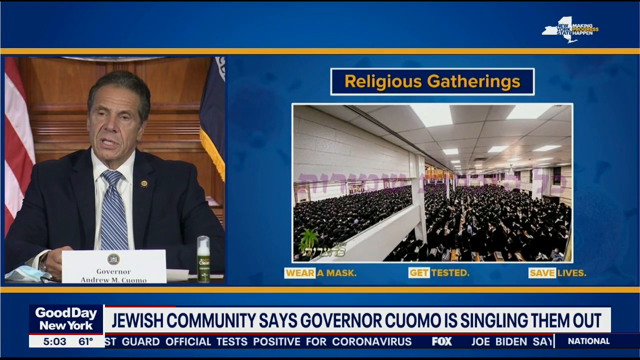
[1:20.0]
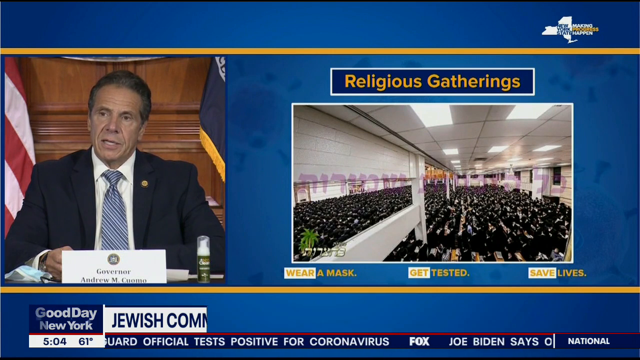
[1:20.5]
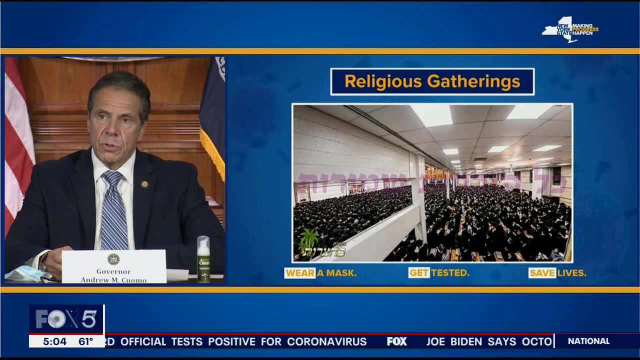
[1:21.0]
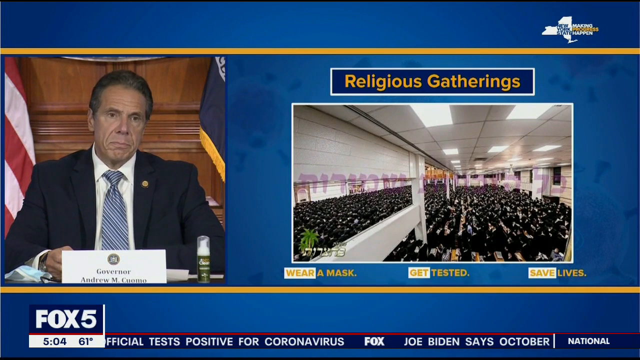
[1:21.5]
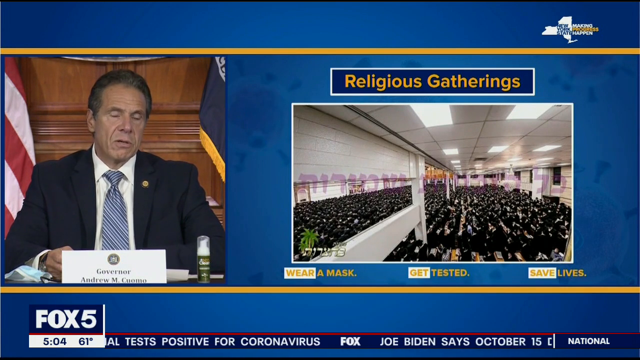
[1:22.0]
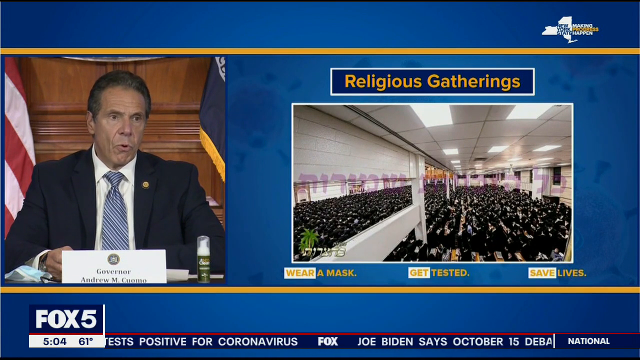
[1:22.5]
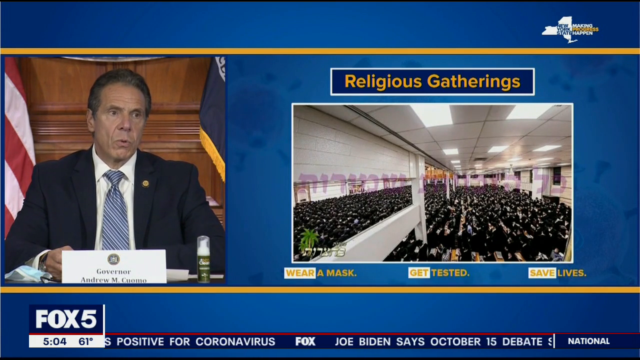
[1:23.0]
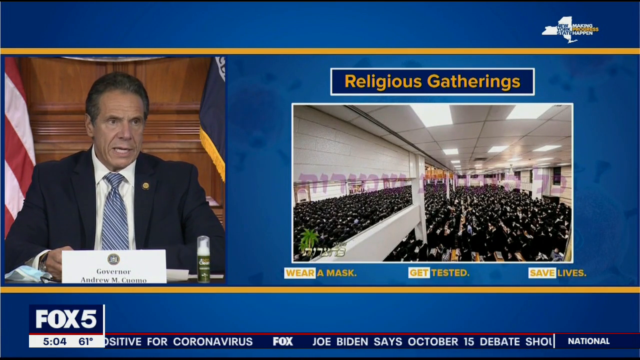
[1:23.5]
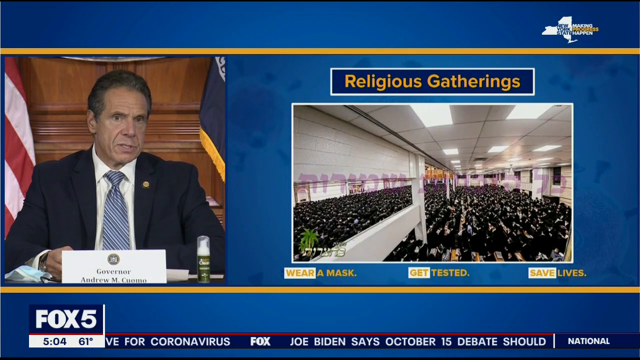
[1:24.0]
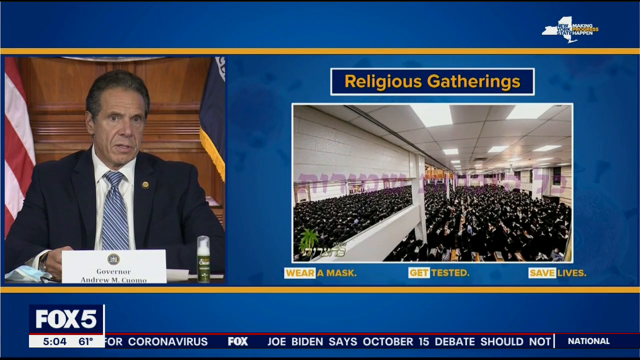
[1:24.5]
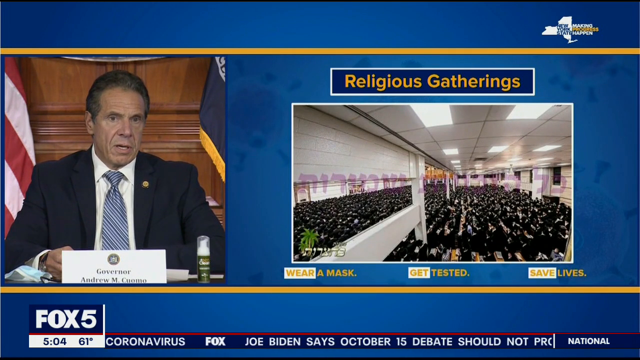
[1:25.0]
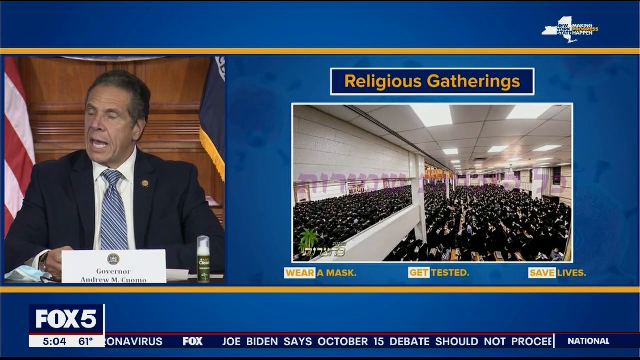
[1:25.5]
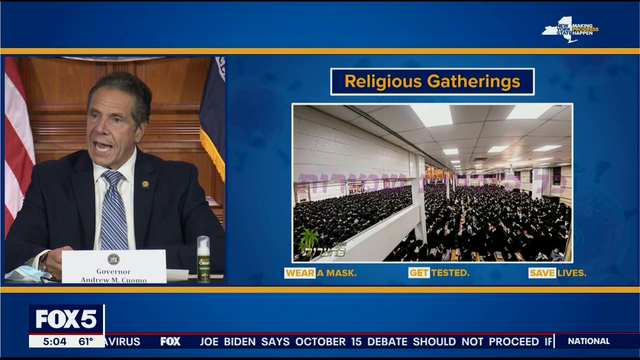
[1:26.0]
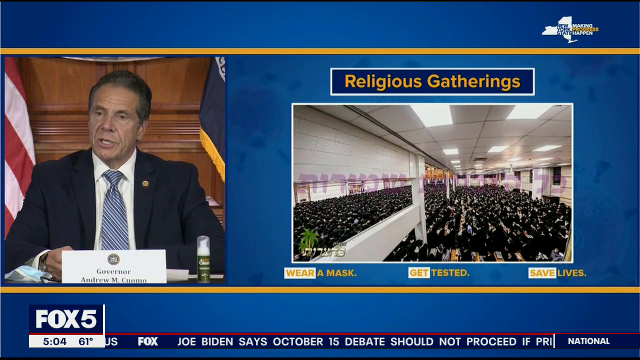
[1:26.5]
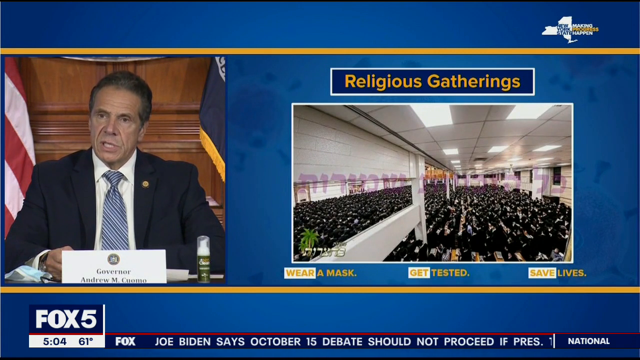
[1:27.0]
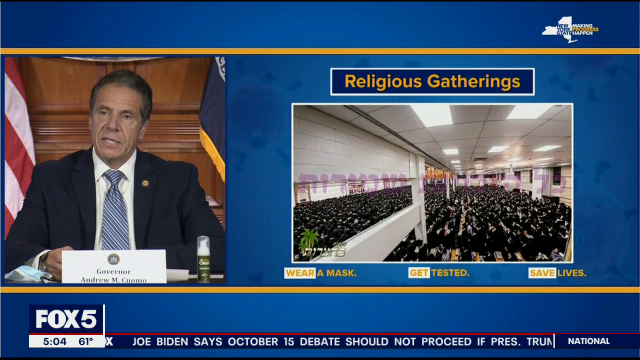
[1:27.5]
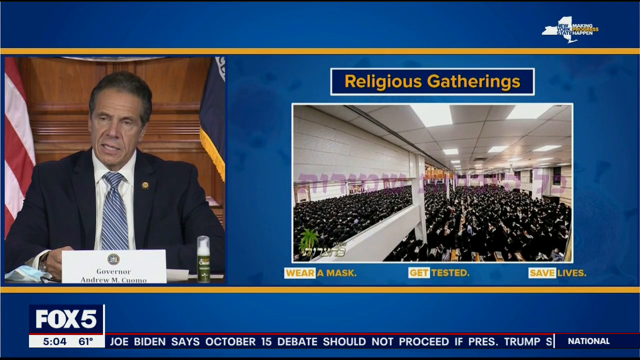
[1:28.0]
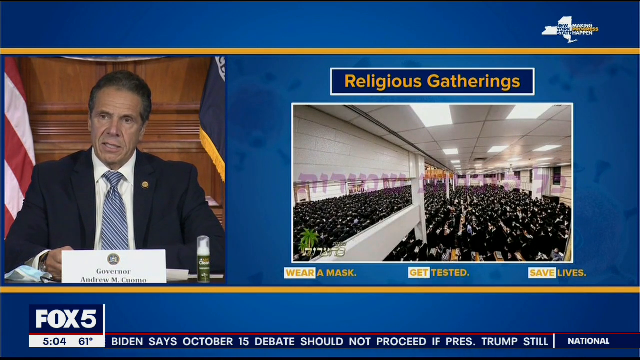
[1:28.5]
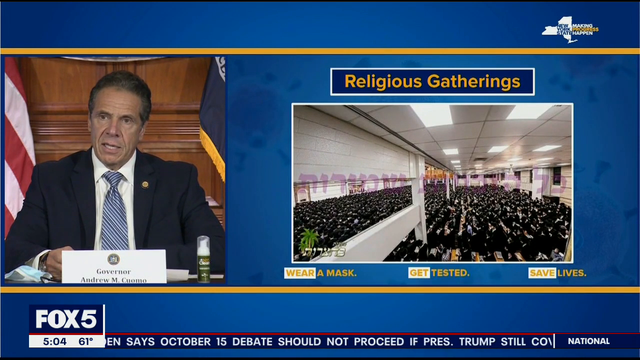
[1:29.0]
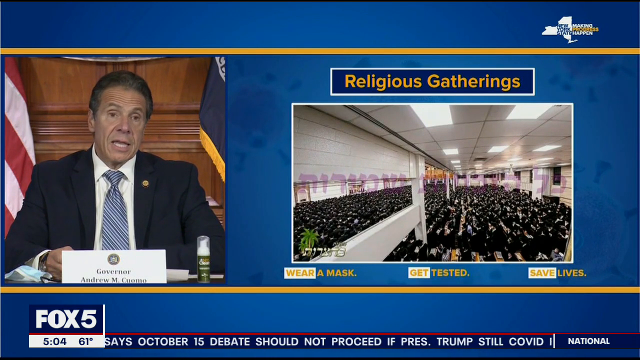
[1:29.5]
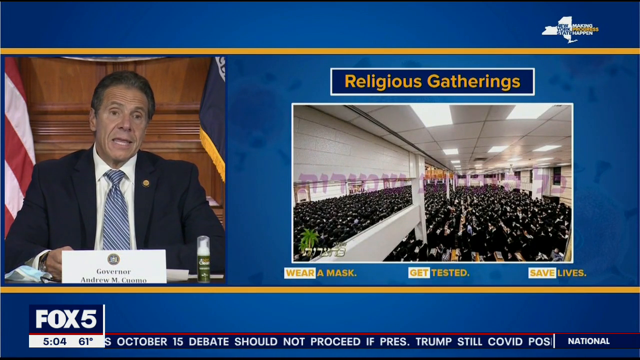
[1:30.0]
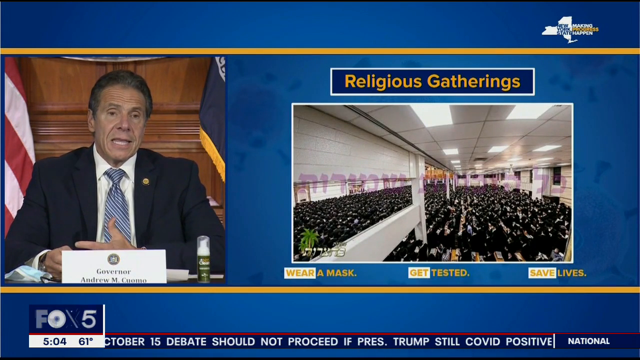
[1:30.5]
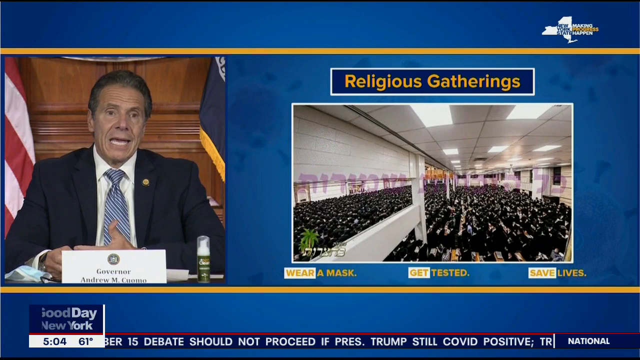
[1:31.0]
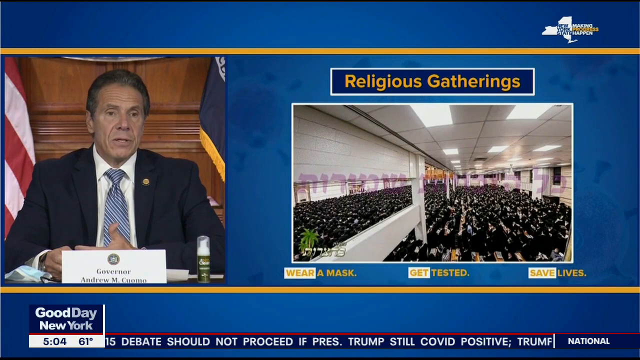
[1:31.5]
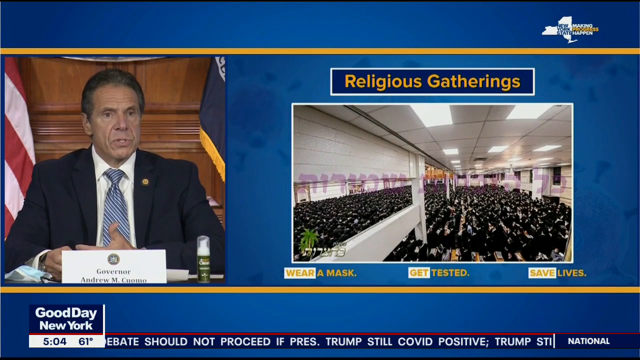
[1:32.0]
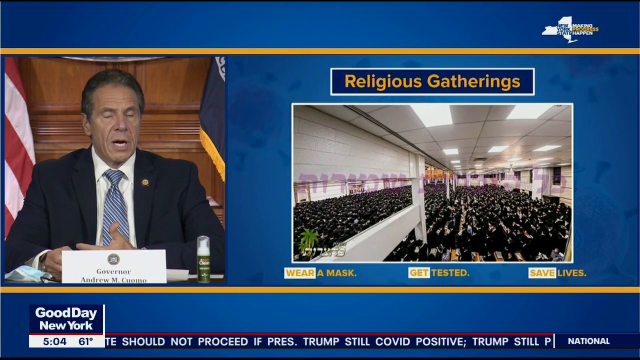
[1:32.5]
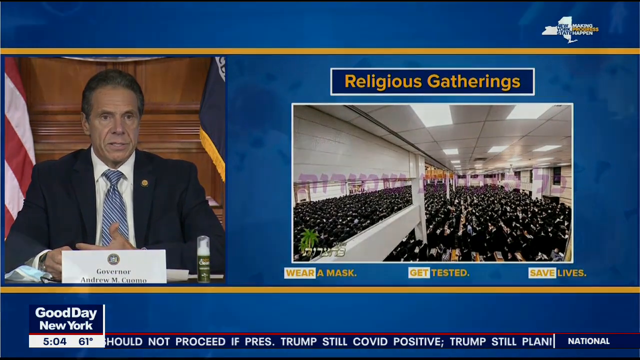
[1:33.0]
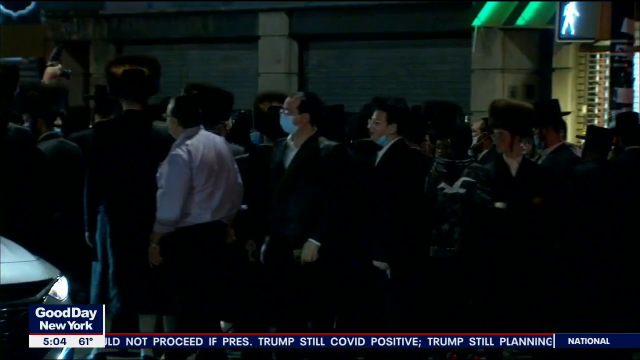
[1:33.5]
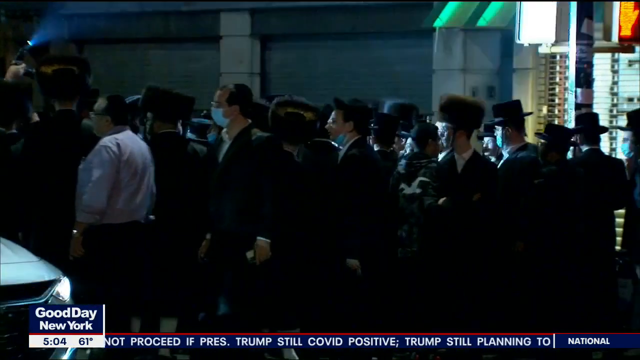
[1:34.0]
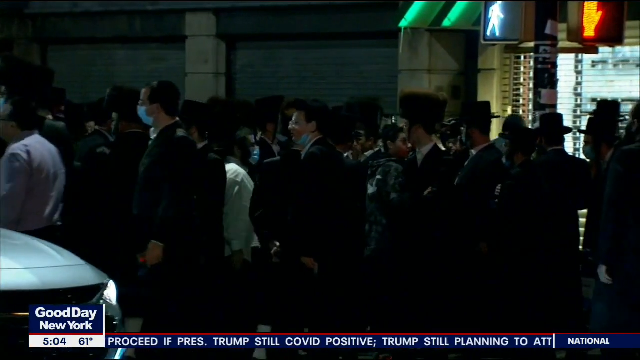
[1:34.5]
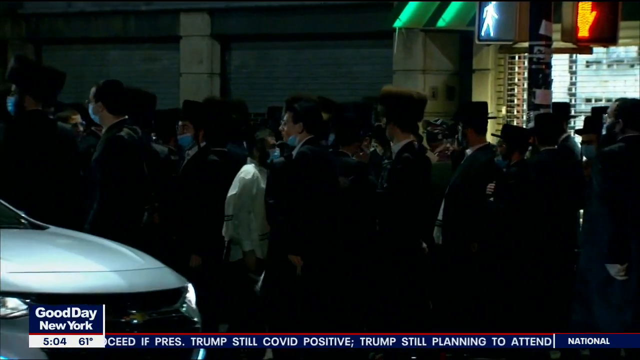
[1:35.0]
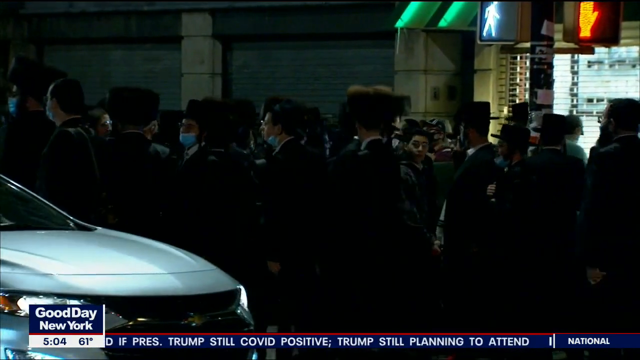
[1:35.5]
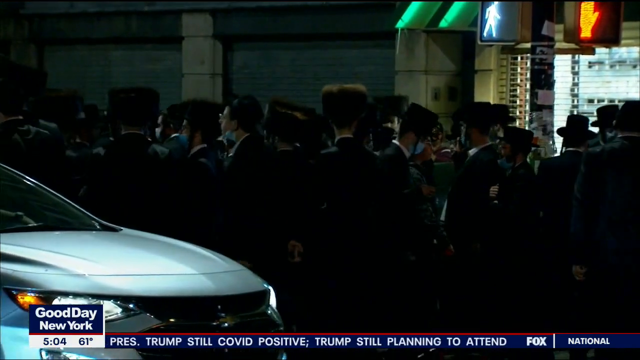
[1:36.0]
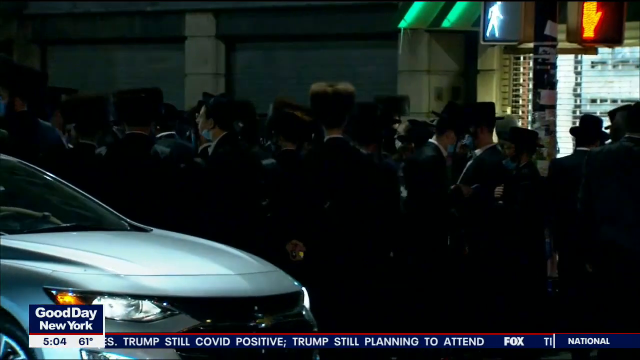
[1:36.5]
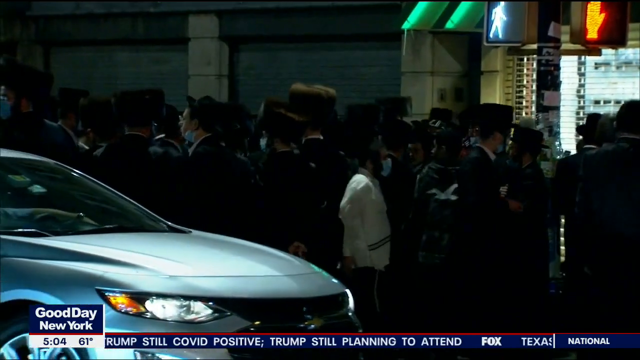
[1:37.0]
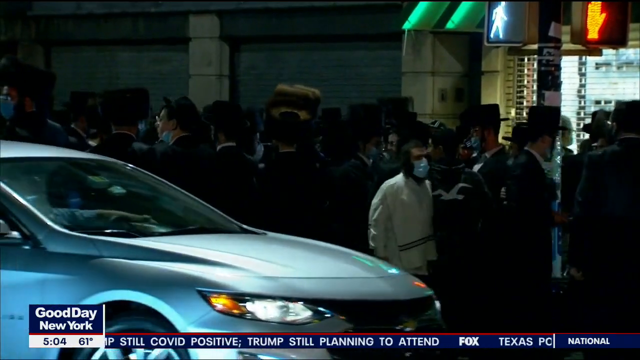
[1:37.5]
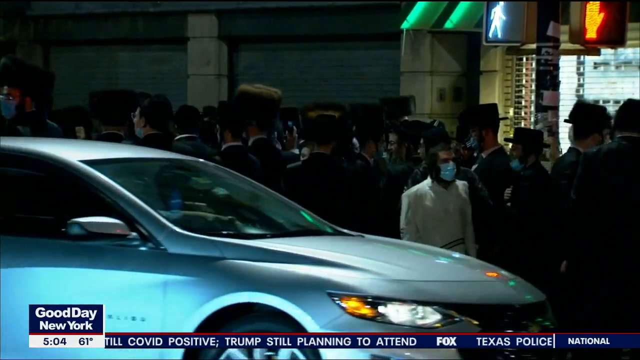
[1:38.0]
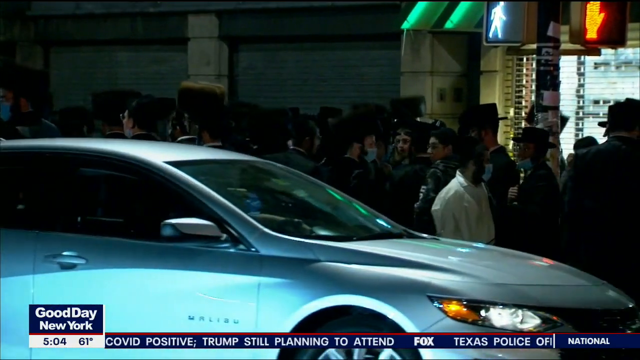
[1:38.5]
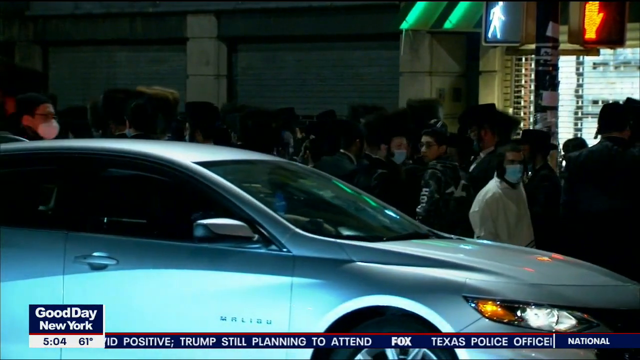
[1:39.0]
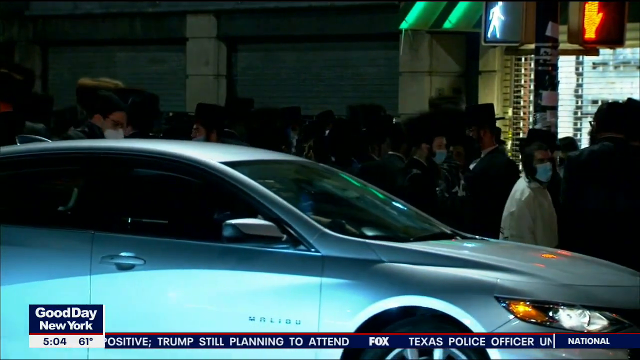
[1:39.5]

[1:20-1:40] The governor continues to speak, moving his head from side to side and nodding with emphasis from left to right, lifting his eyebrows as he speaks. His hands rest on the table, then one hand lifts up, palm facing the ceiling and thumb up, for emphasis; he looks surprised. Other headlines run along the bottom of the screen in a navy blue bar. The image changes to a street recording of Hasidic men walking around. A silver car attempts to drive through the crowd, but there are so many men that it is extremely difficult for the car to get through. The men walk both on the pavement and on the road. There is a variety of Hasidic men, some in traditional furry hats and some in regular kippahs, with about a 50-50 split between men wearing face coverings and men without. It is late at night and pitch black outside, with lighting from the streetlights.